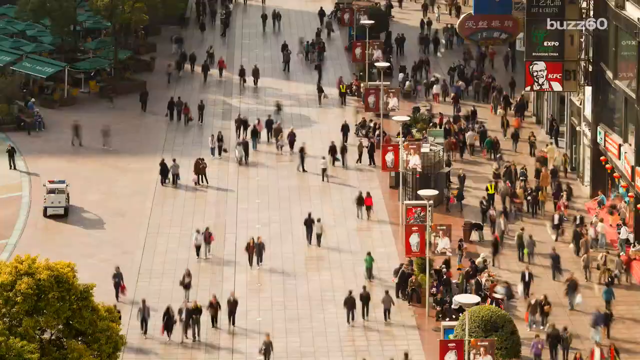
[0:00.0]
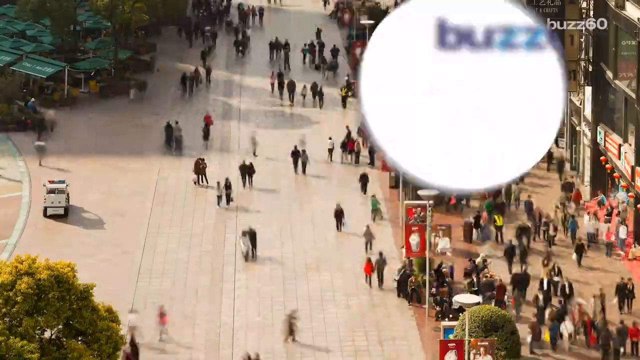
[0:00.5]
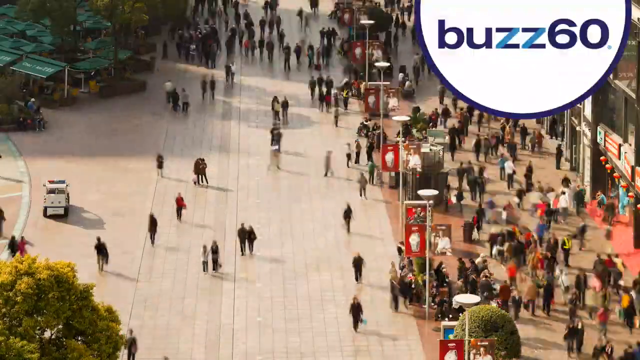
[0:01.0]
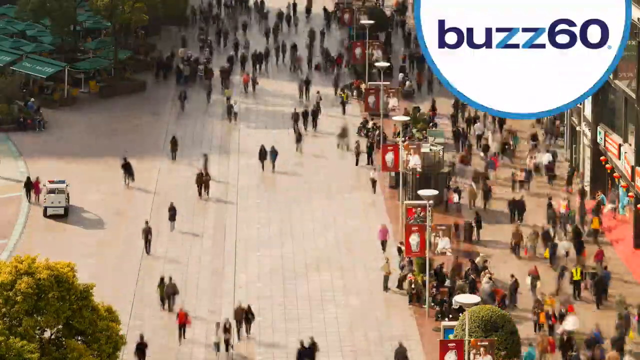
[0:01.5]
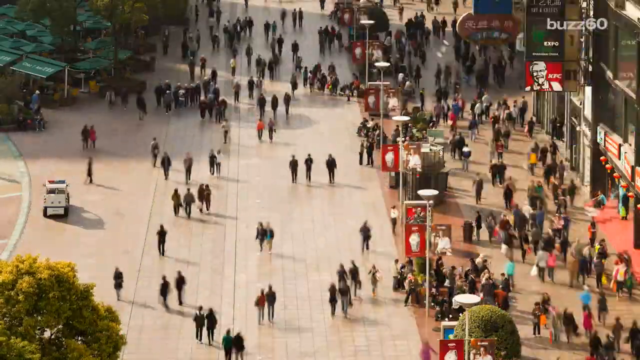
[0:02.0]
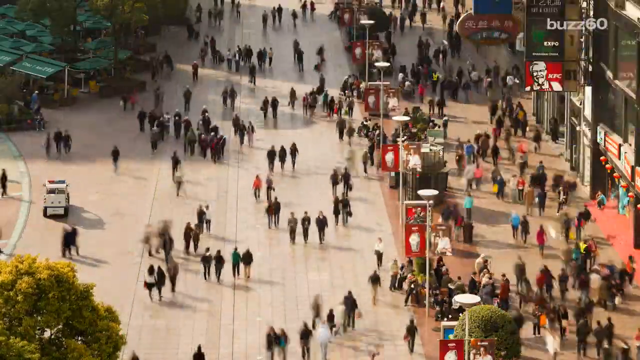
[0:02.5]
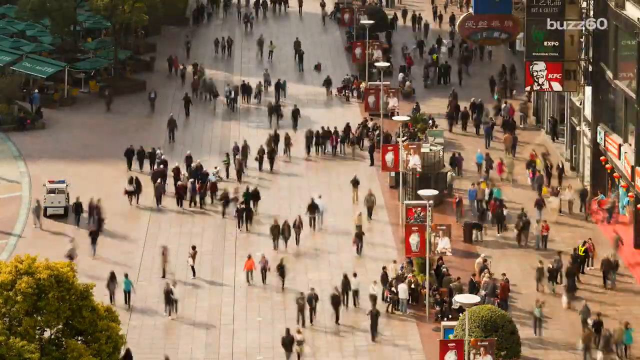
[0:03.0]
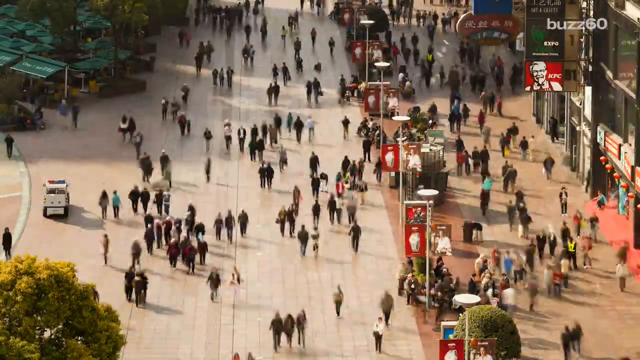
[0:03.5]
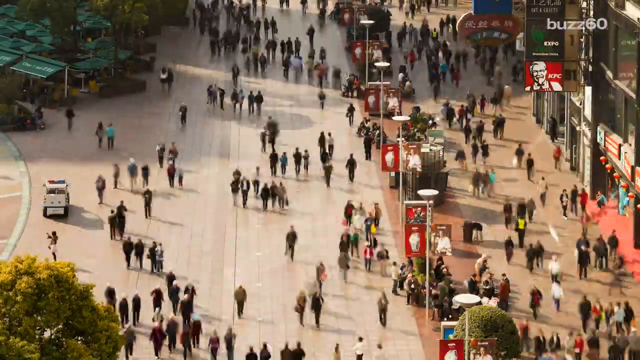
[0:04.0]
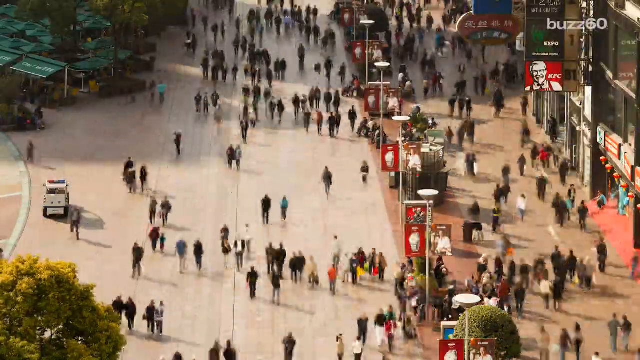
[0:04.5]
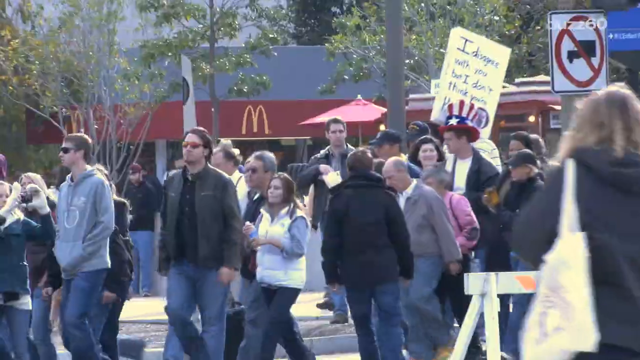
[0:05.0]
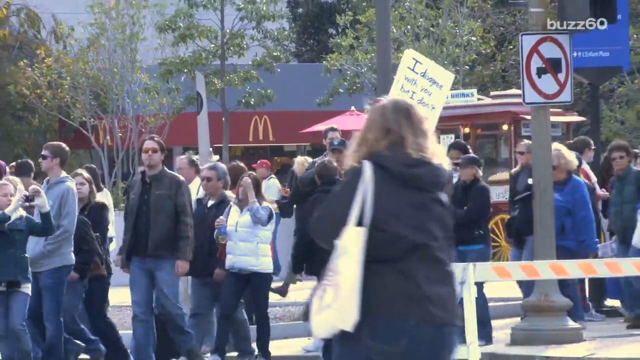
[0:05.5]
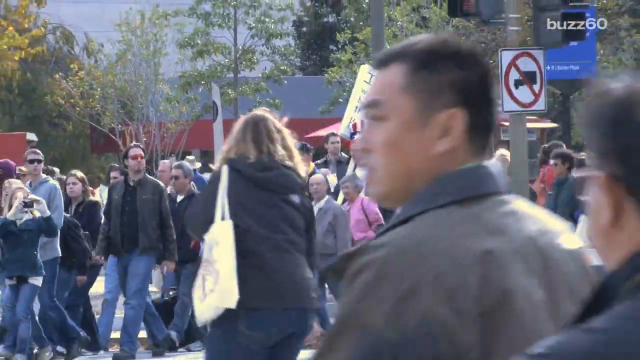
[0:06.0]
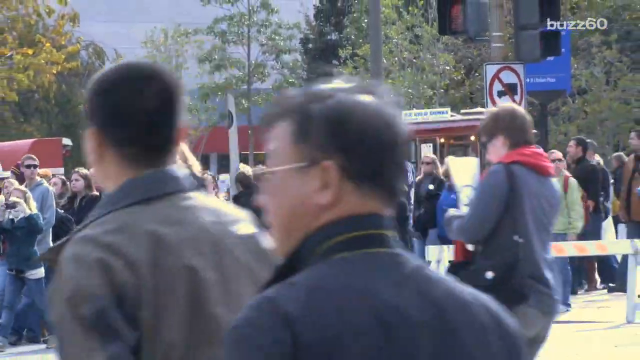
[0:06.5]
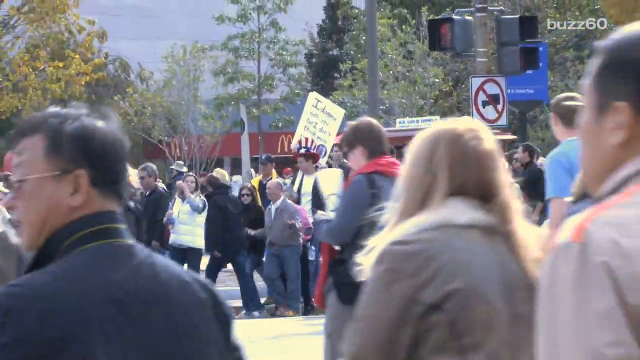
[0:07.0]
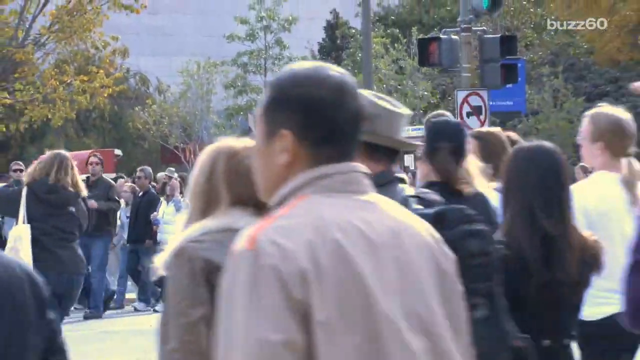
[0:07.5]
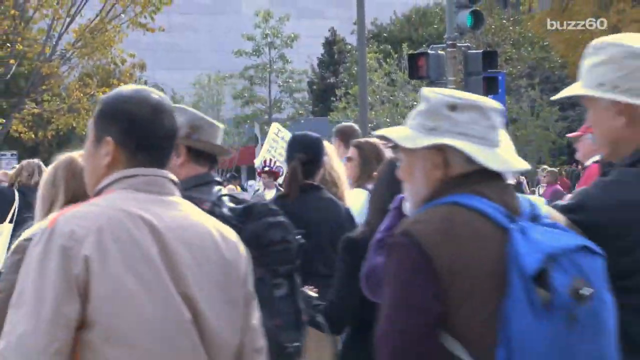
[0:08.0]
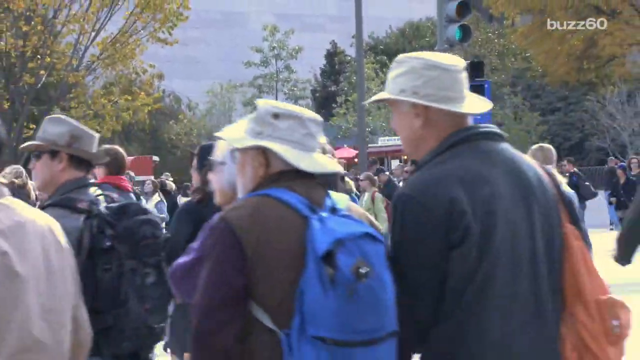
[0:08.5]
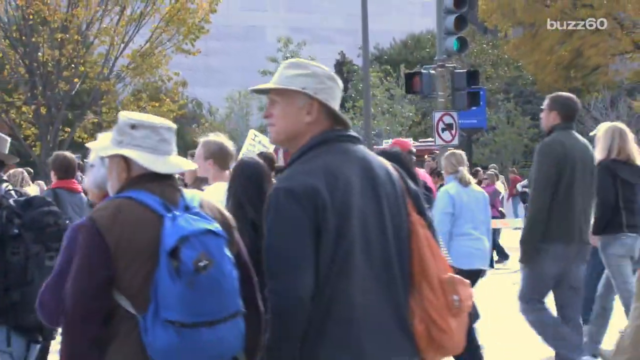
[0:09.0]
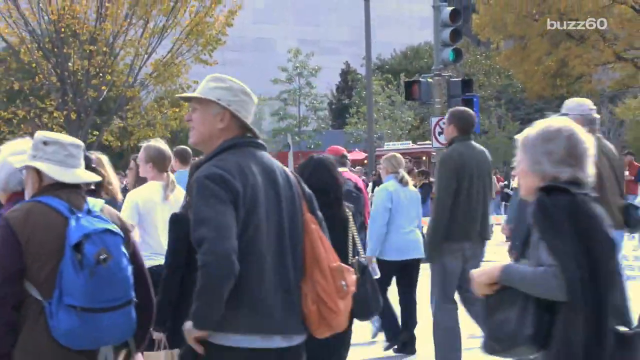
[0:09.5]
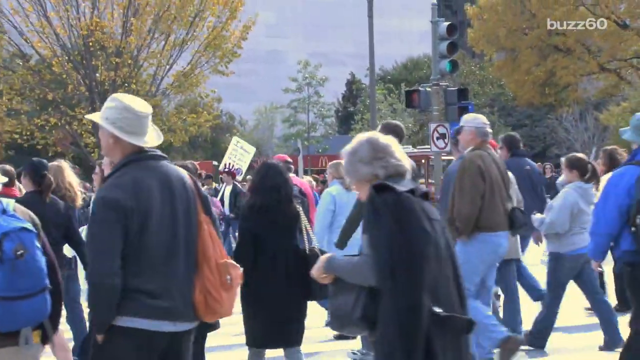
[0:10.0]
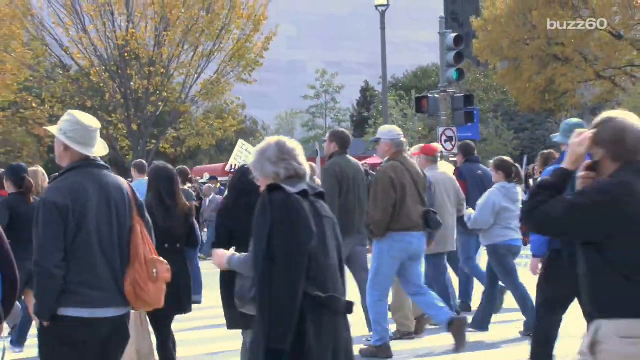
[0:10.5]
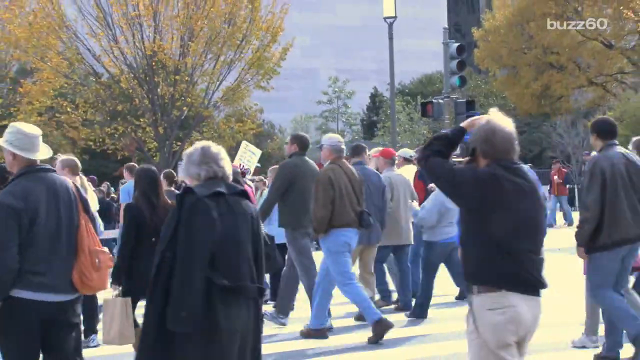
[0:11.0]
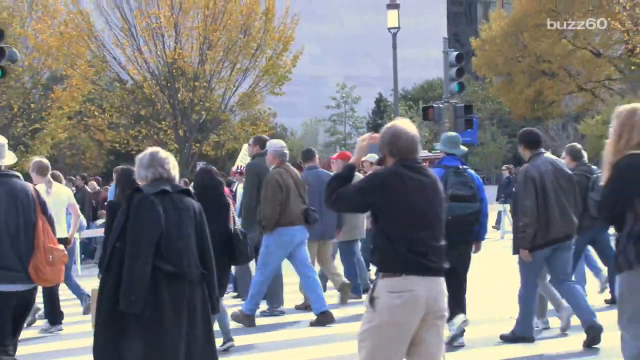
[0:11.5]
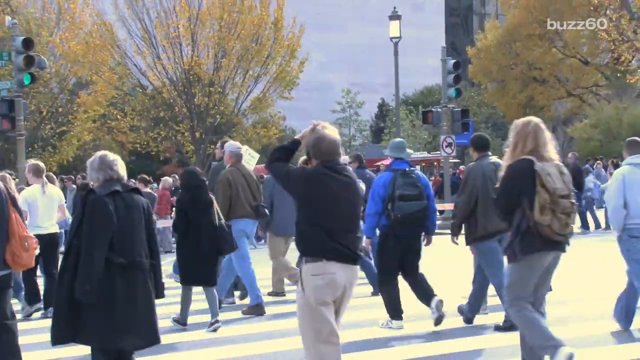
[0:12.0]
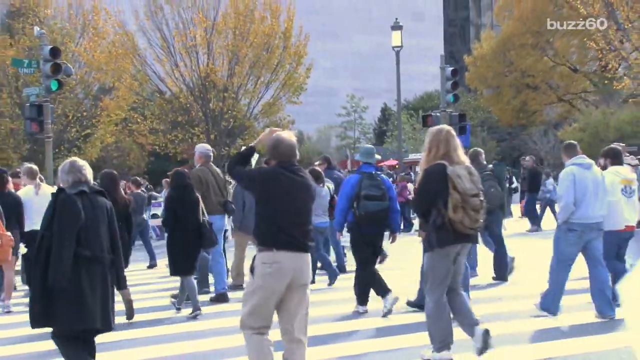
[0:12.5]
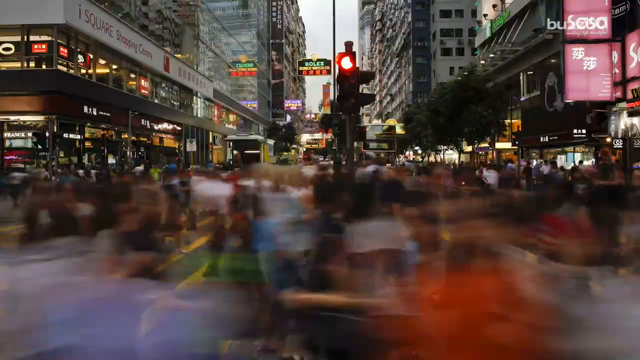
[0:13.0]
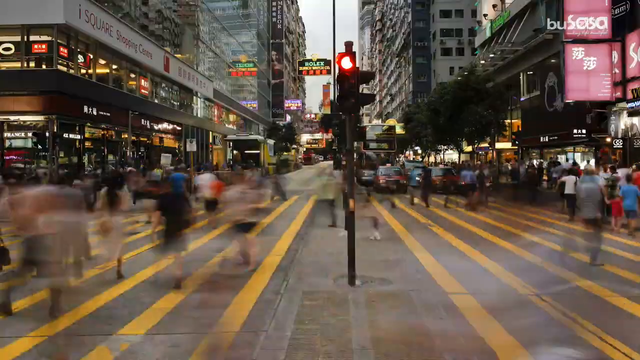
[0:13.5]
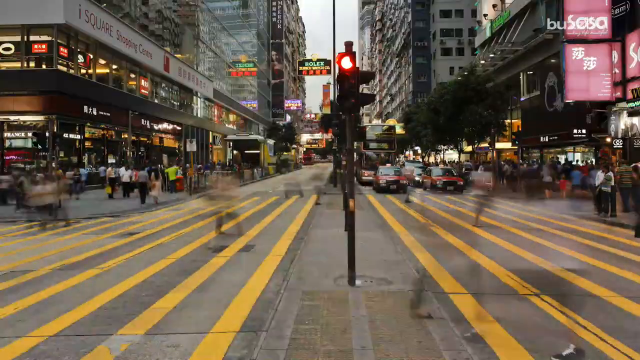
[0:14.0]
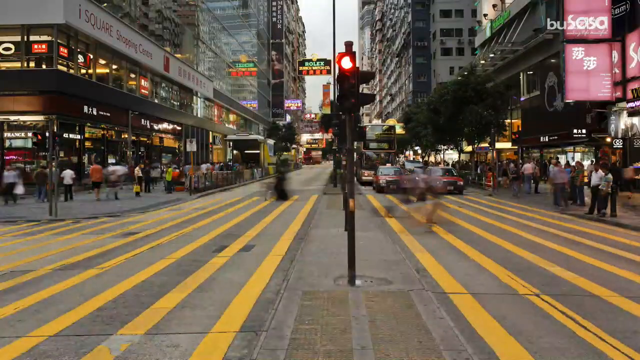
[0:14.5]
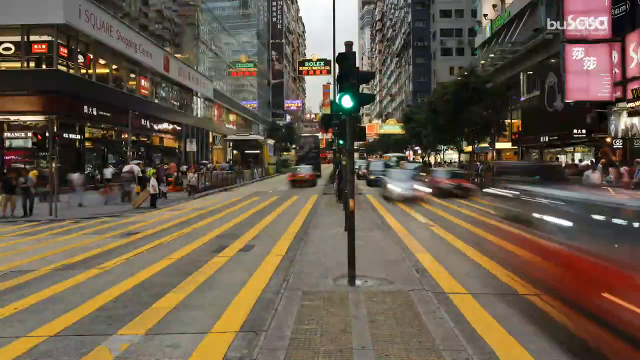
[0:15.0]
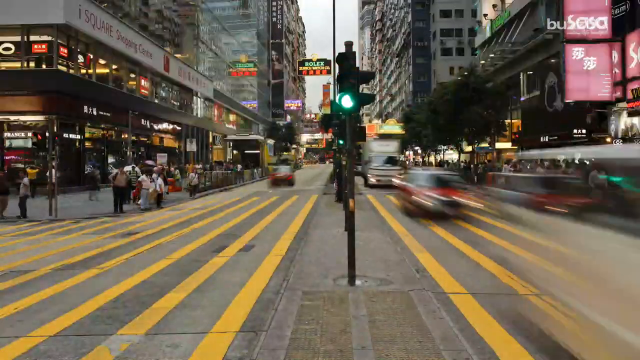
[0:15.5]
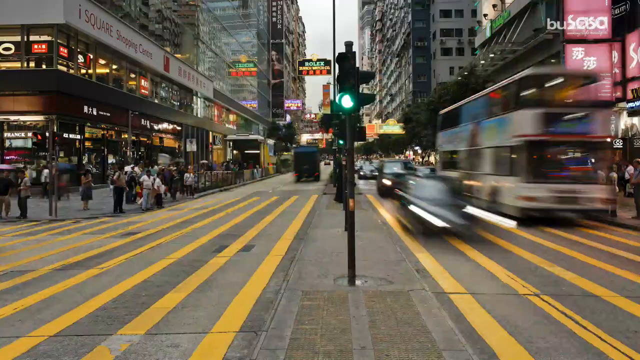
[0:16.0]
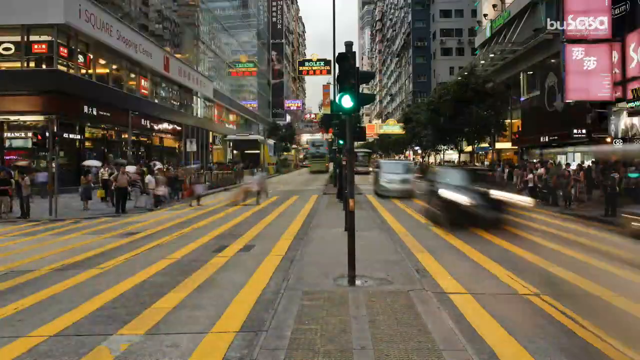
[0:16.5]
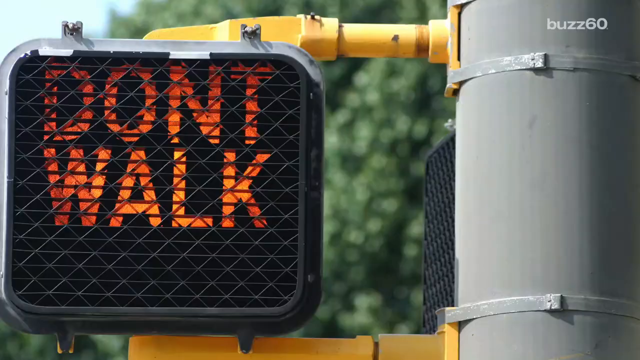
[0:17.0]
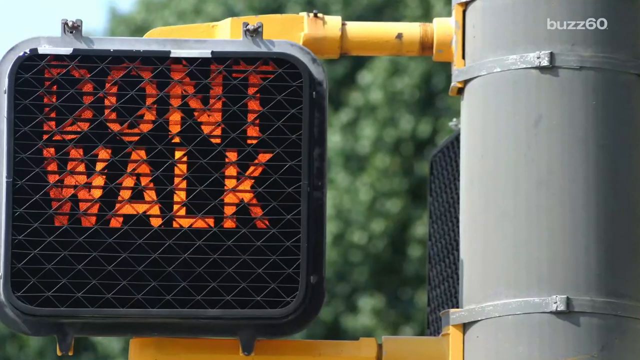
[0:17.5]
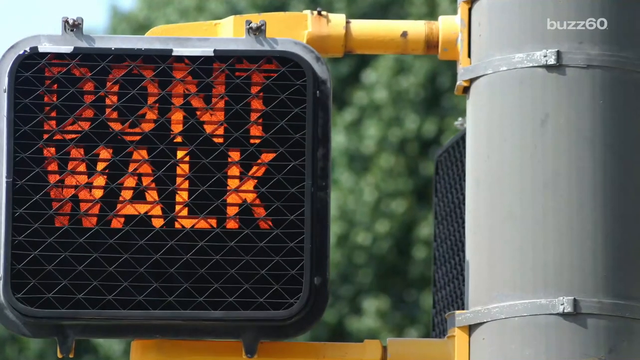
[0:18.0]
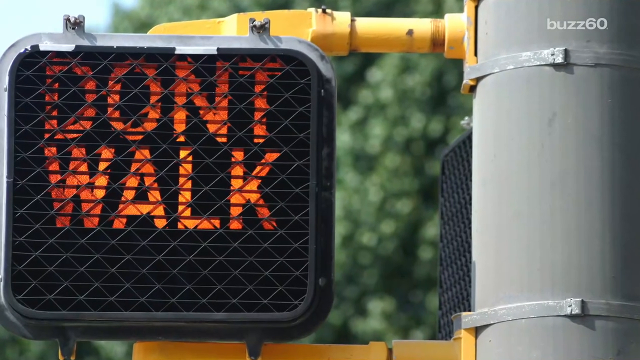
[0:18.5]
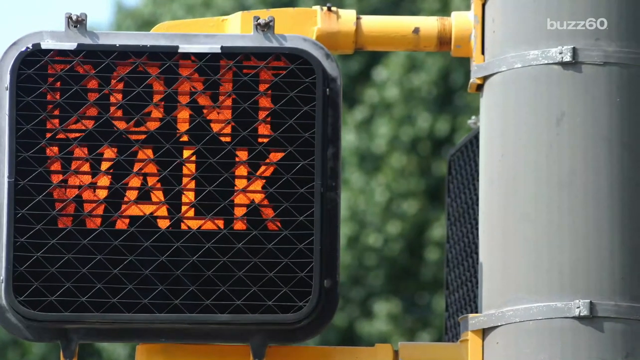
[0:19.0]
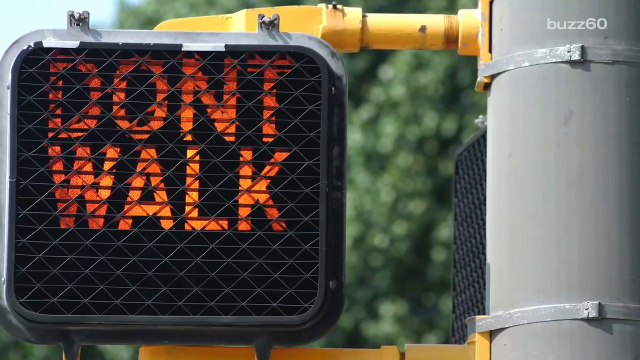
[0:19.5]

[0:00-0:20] A circular logo reading "Buzz 60" bounces in like a ball and sticks to the top right corner. A very fast time-lapse shows a crowd of people walking across a street. Next, many people walk across the street; someone is carrying a sign, so it possibly is some kind of protest. A time-lapse follows of many cars moving away from and toward the viewer on the left and right sides of the street. Then there is a picture of a sign that says "don't walk".